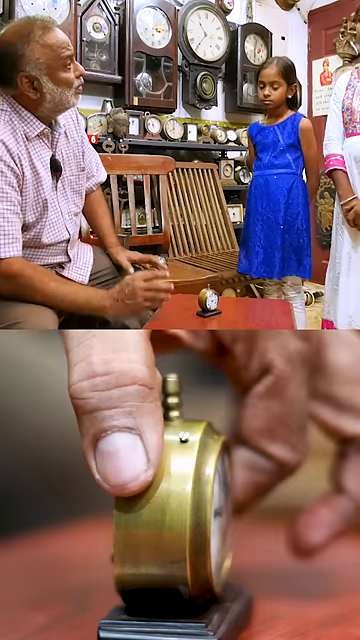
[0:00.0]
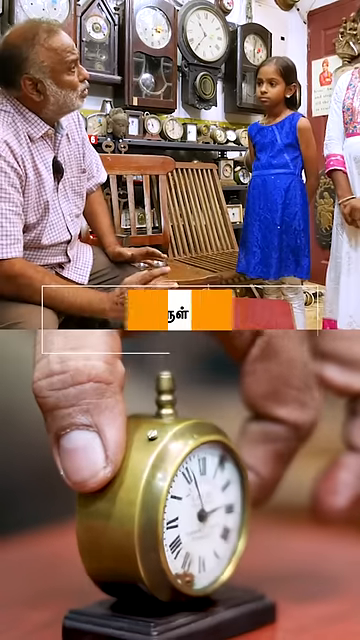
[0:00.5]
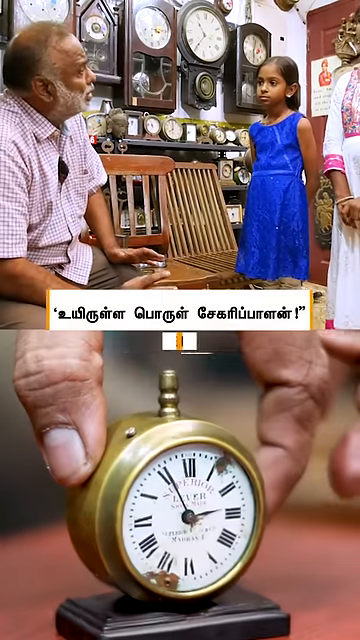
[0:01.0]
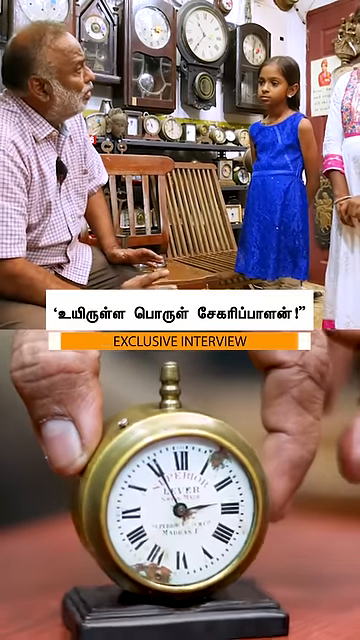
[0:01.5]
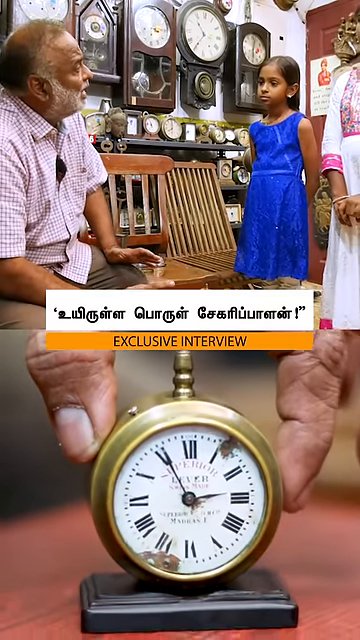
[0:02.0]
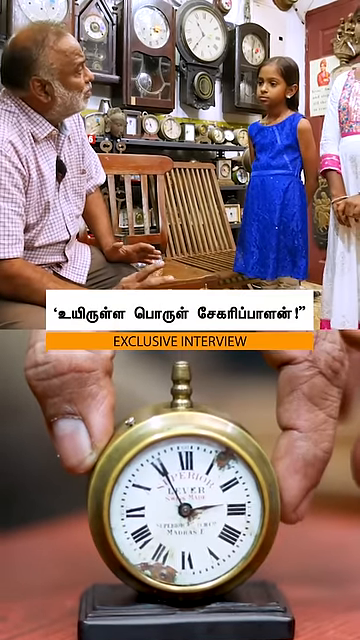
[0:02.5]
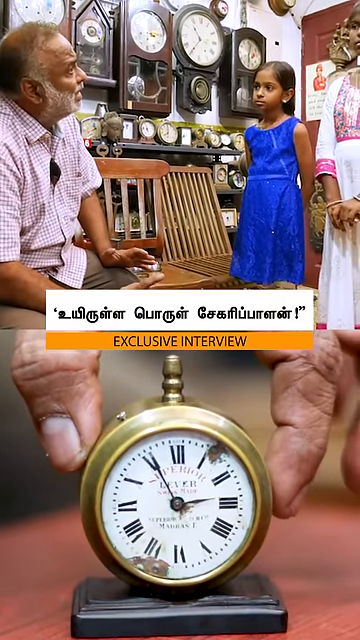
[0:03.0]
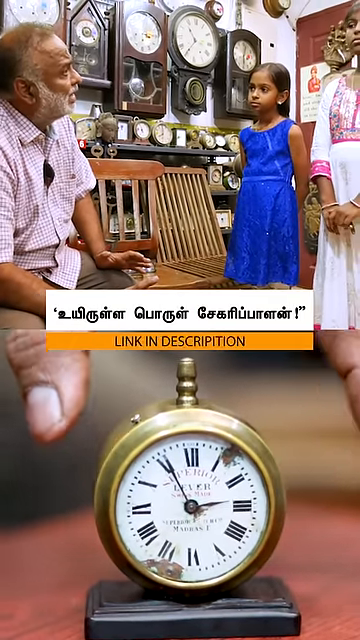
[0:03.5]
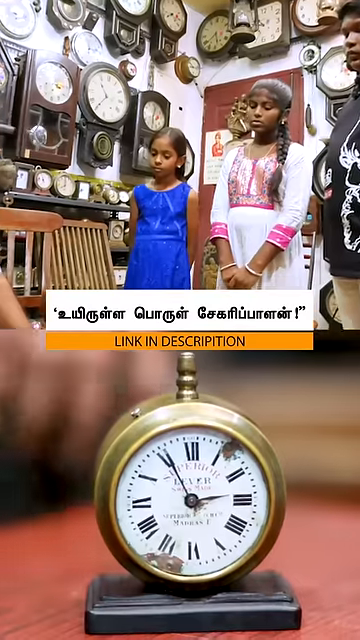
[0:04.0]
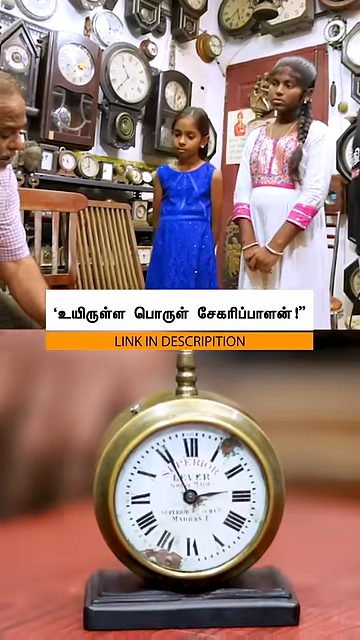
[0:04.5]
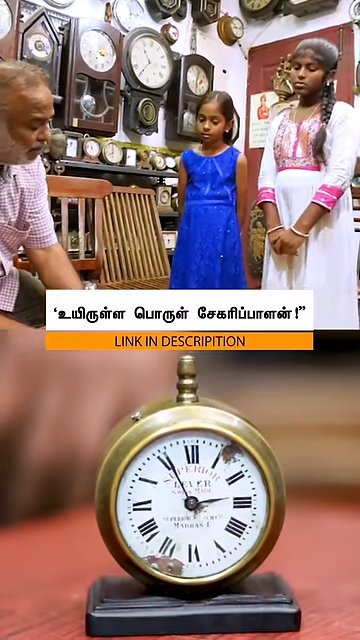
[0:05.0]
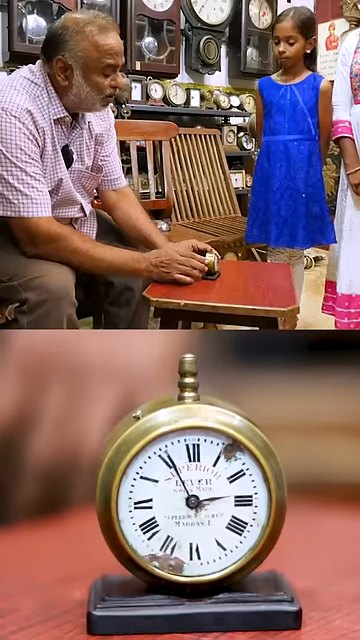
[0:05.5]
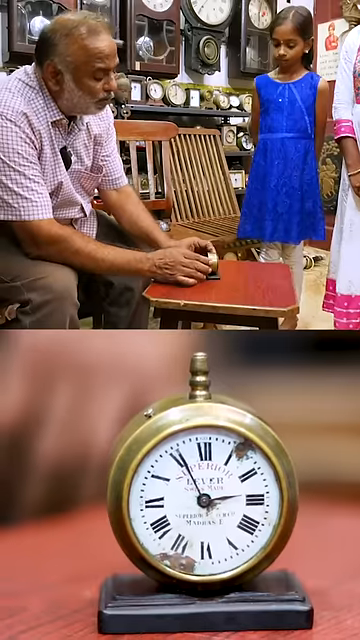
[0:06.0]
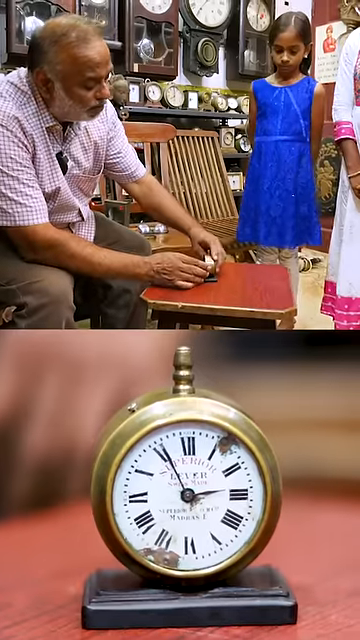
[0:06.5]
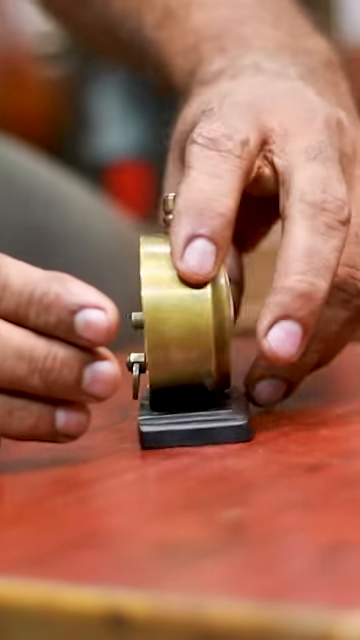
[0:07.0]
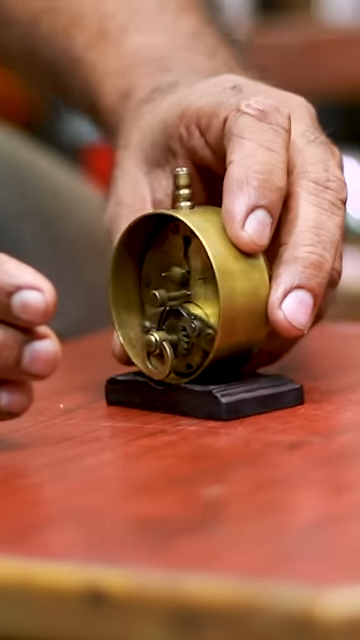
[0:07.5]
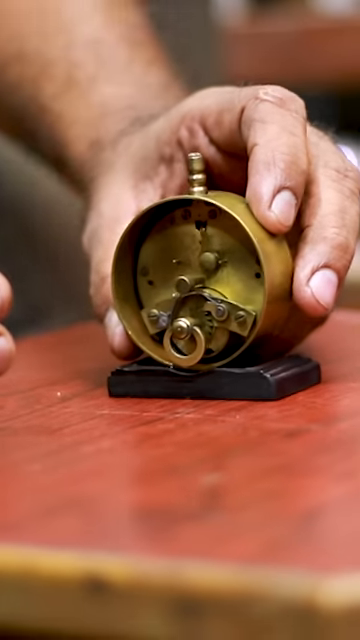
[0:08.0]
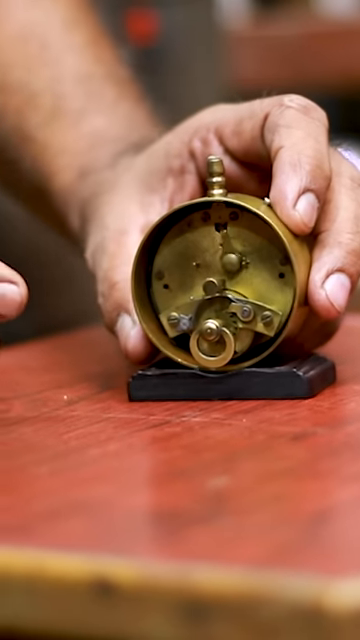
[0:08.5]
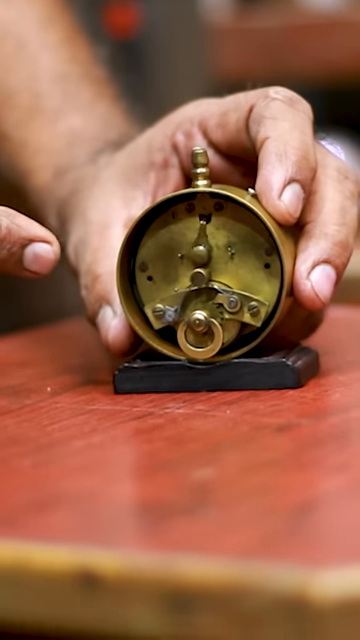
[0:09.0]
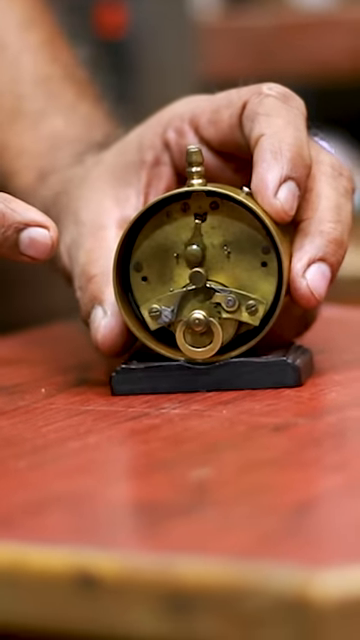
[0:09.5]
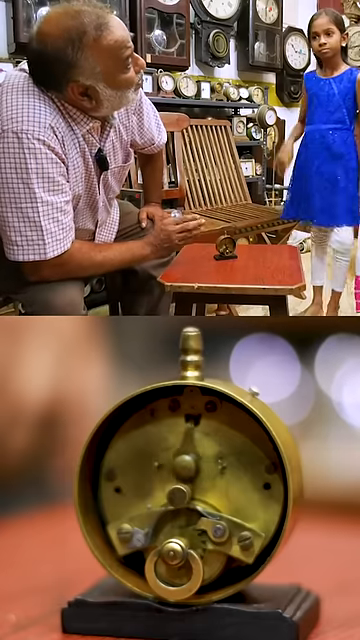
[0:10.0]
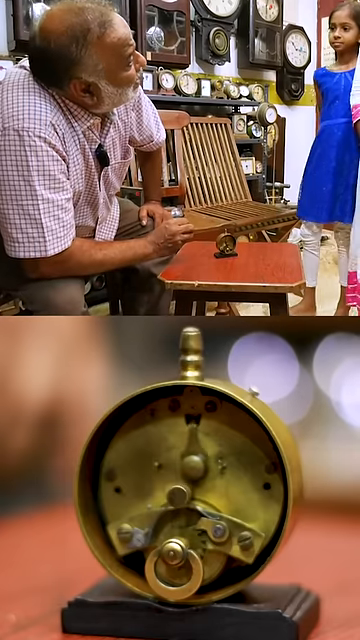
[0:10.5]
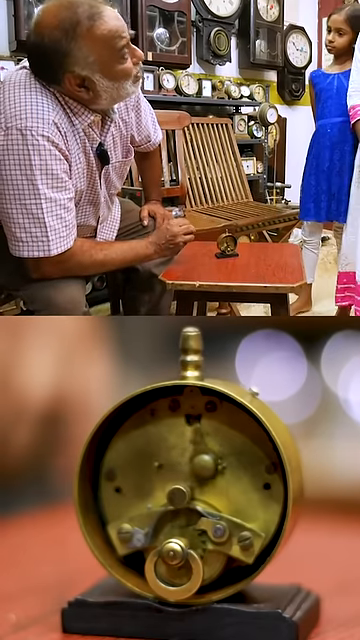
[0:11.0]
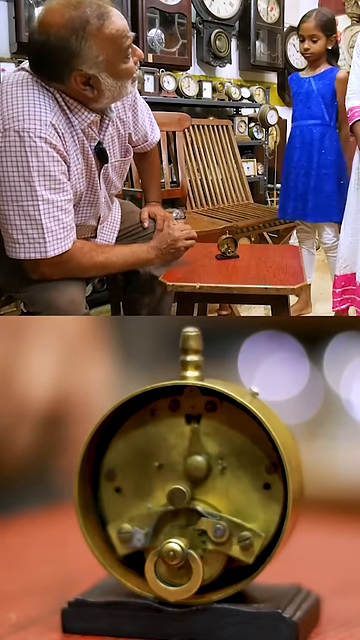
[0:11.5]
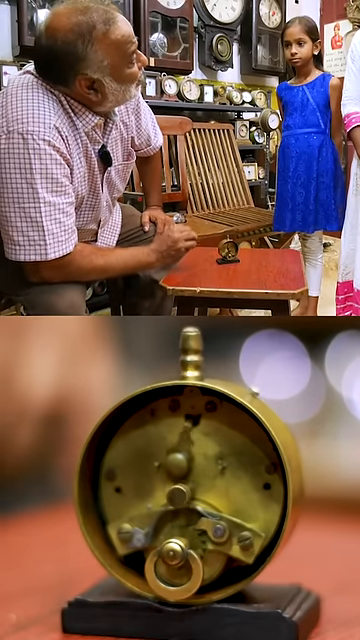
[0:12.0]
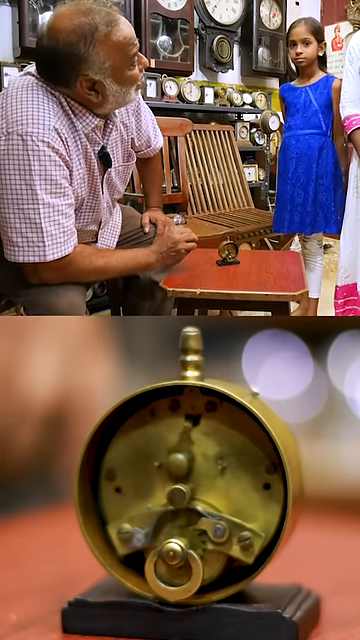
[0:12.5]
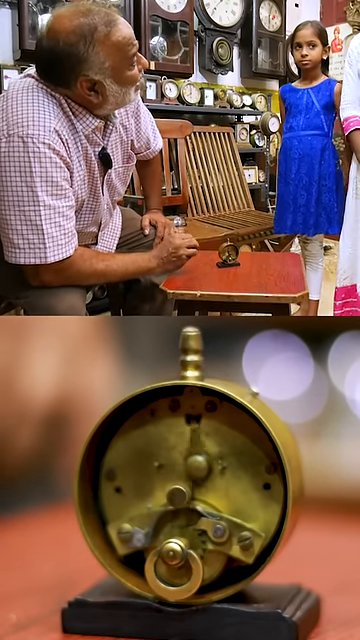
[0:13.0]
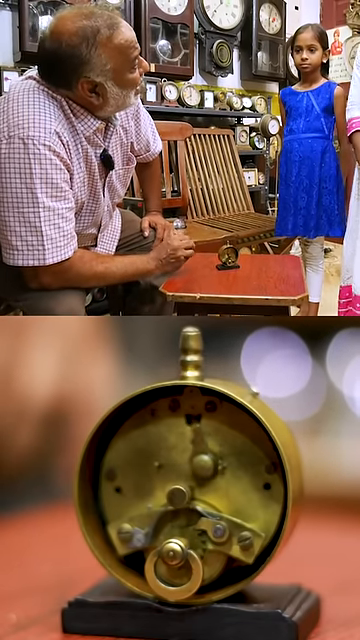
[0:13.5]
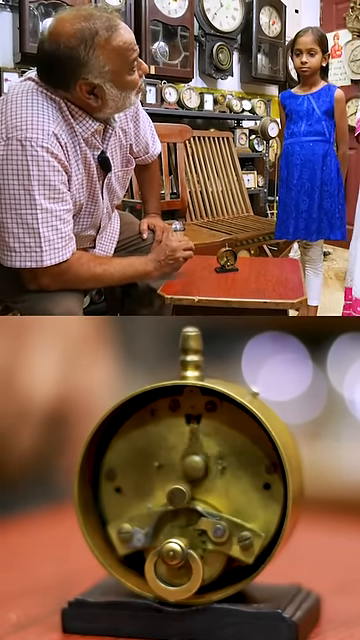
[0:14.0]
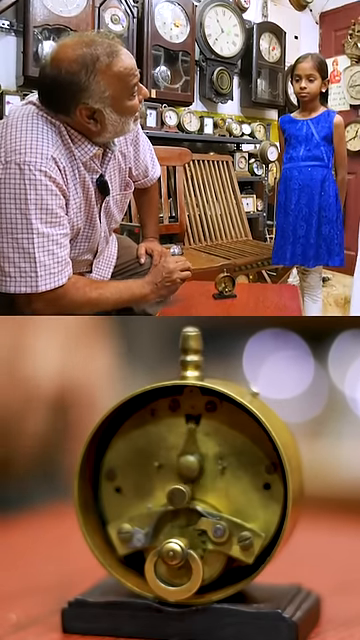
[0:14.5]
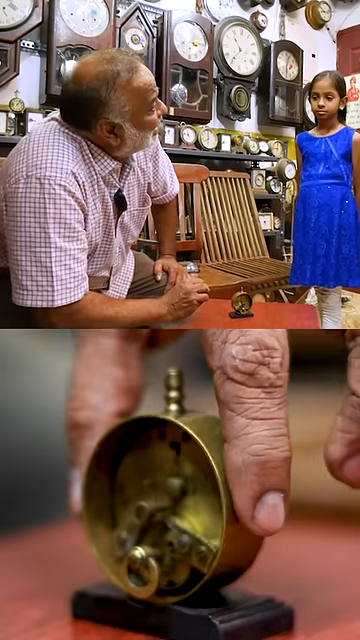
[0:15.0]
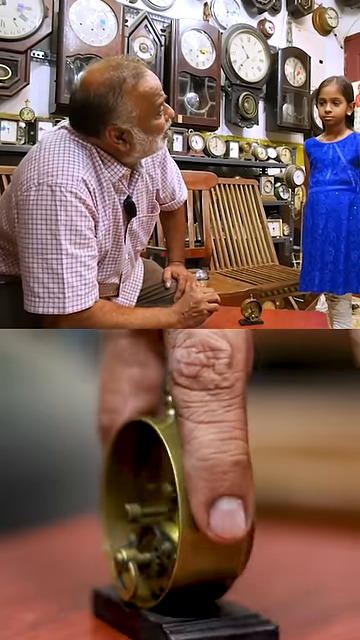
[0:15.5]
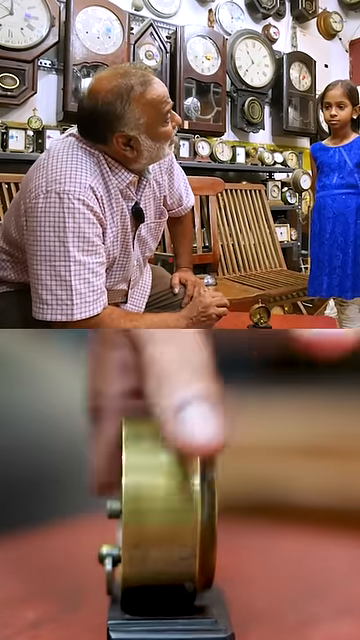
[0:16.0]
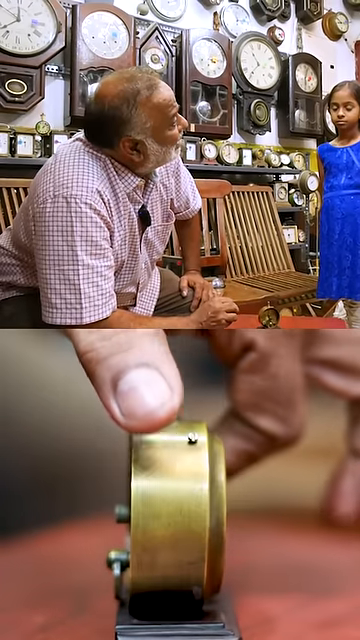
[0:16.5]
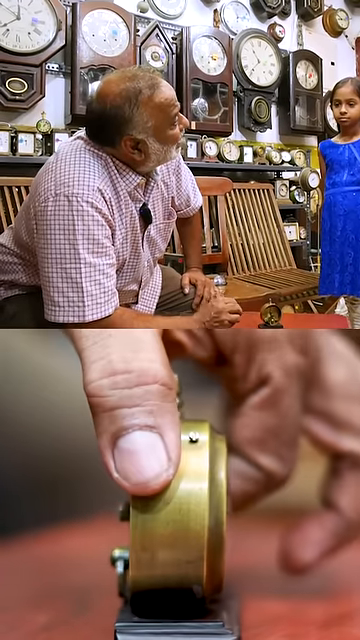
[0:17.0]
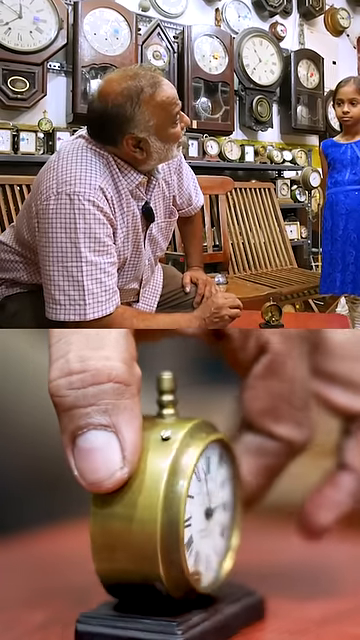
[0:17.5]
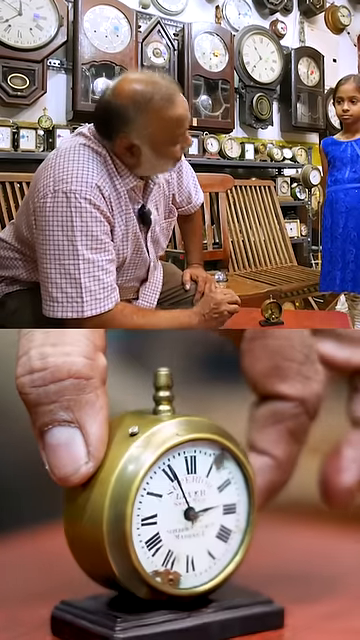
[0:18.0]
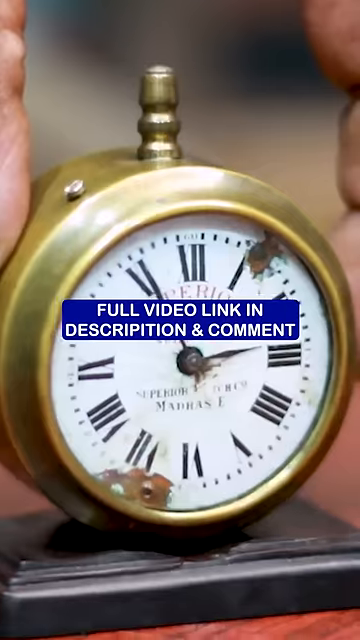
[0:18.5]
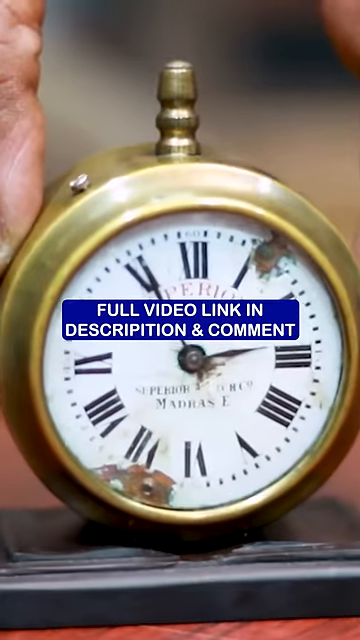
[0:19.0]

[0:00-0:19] A pendulum clock, said to be the world's smallest, has been brought in for a repair, apparently somewhere in India. A man shows the clock from the back of his store, where many clocks are on the wall. There is a close-up of the clock, and the man is seen talking in his store. The close-up shows an analog clock with a pendulum swinging back and forth inside it; the clock is working. The man, a clock fixer who works in a clock store, is talking to and teaching a woman and her daughter, who is in a blue dress, about the pendulum clock; it is unclear, but they may be a family.